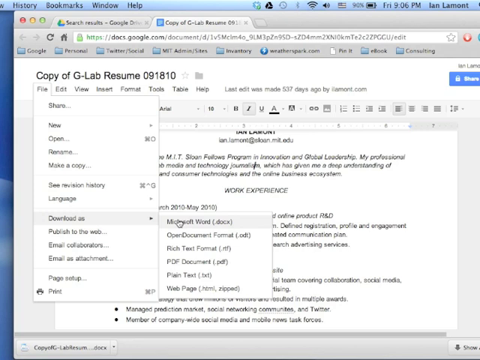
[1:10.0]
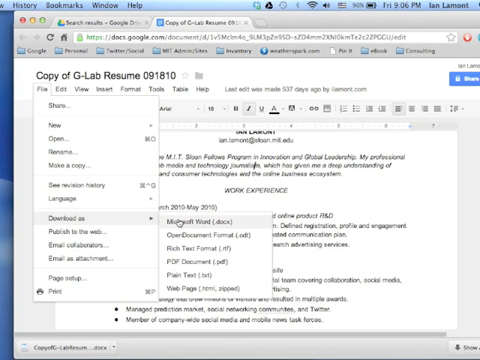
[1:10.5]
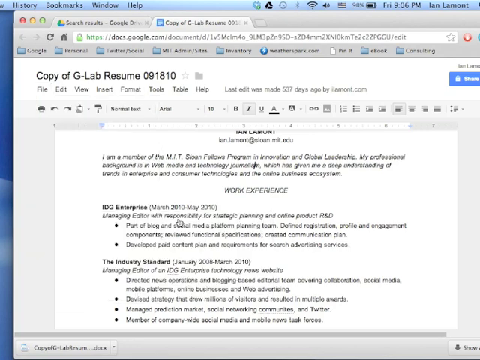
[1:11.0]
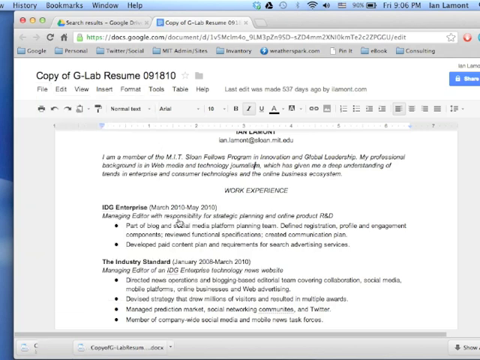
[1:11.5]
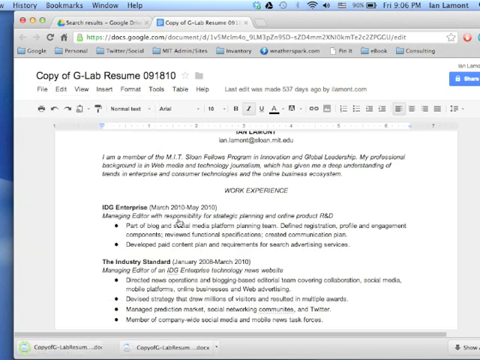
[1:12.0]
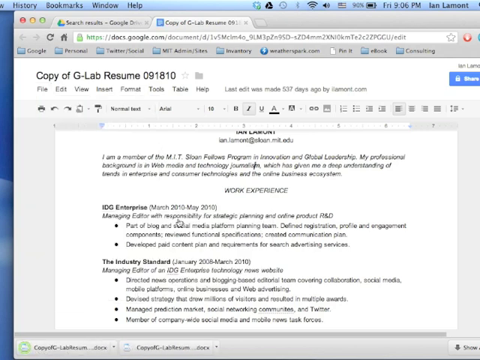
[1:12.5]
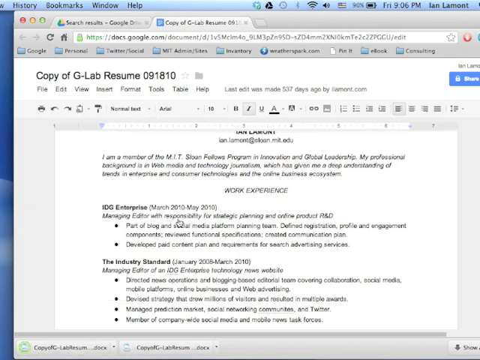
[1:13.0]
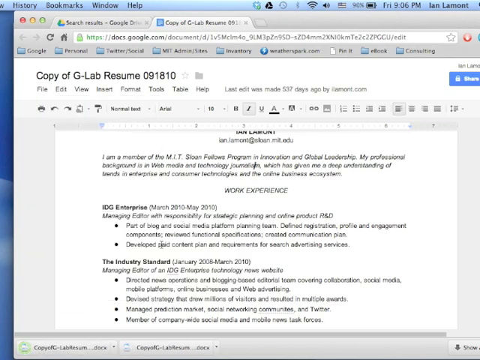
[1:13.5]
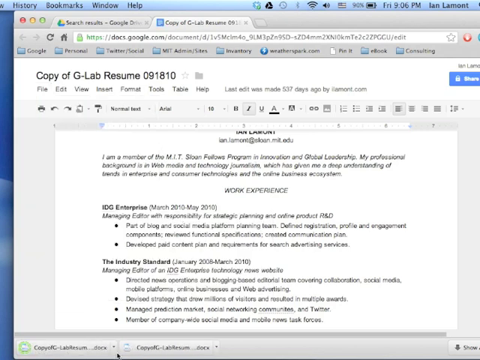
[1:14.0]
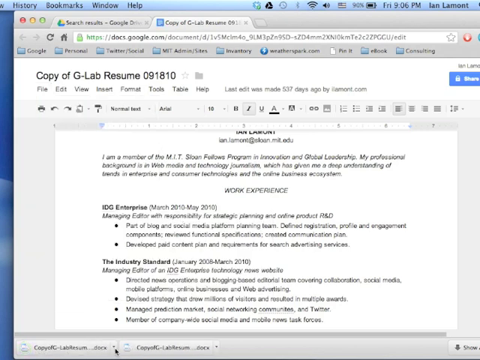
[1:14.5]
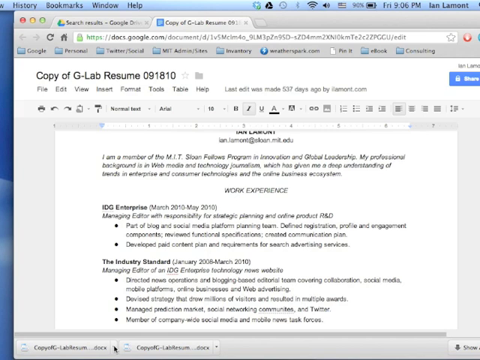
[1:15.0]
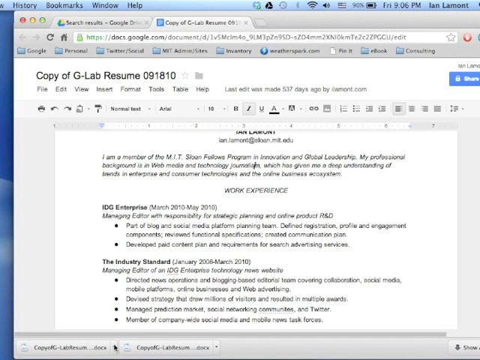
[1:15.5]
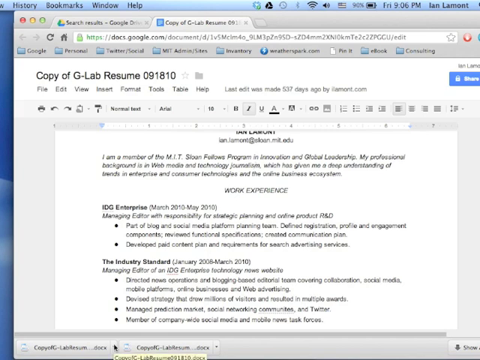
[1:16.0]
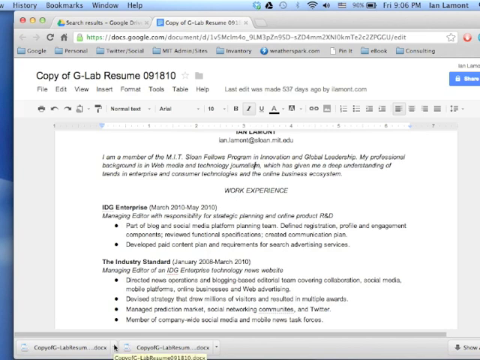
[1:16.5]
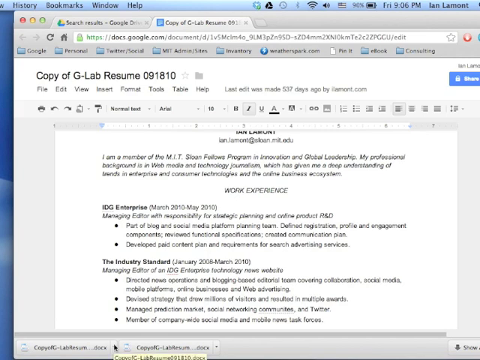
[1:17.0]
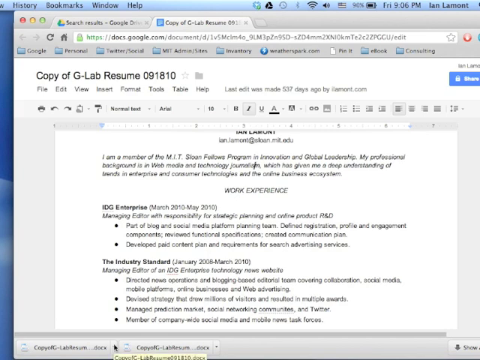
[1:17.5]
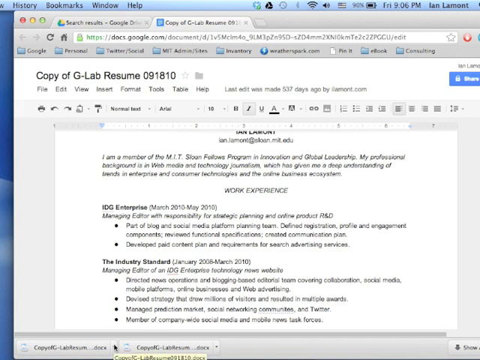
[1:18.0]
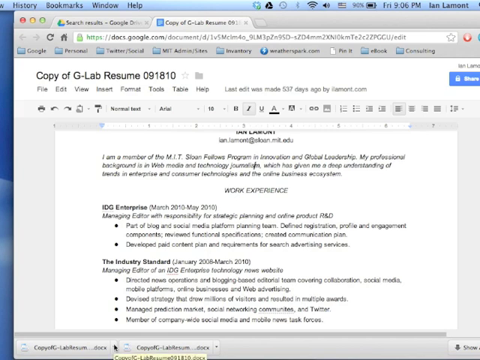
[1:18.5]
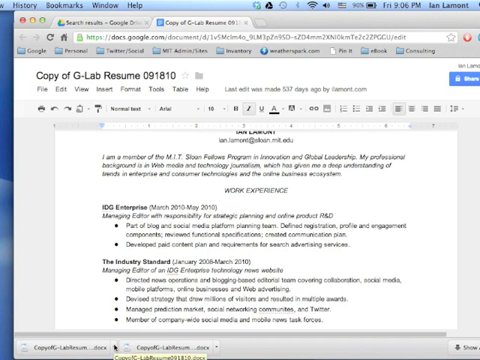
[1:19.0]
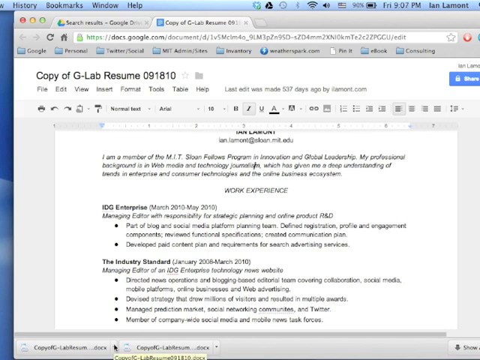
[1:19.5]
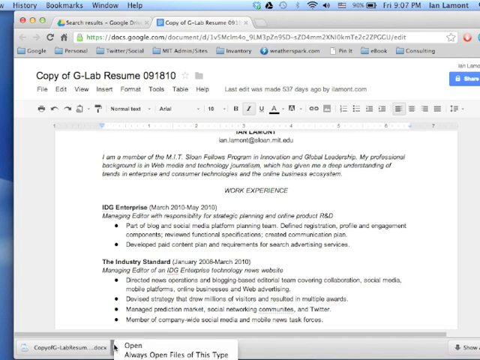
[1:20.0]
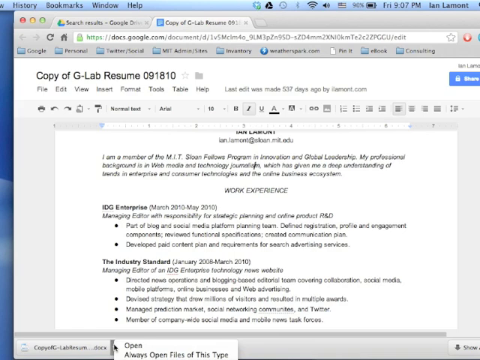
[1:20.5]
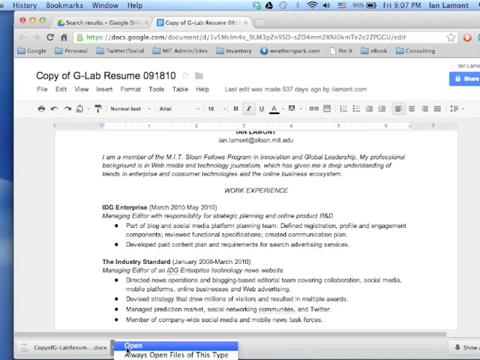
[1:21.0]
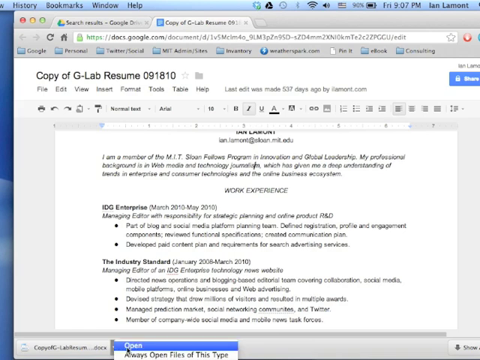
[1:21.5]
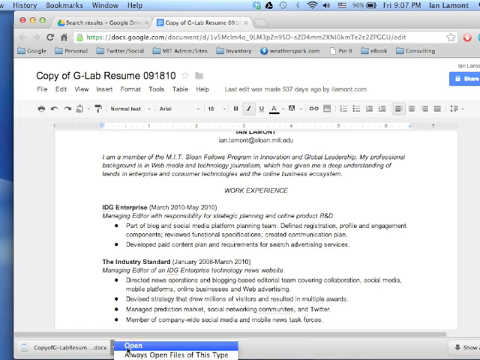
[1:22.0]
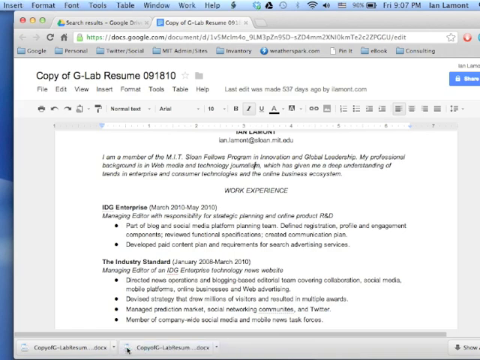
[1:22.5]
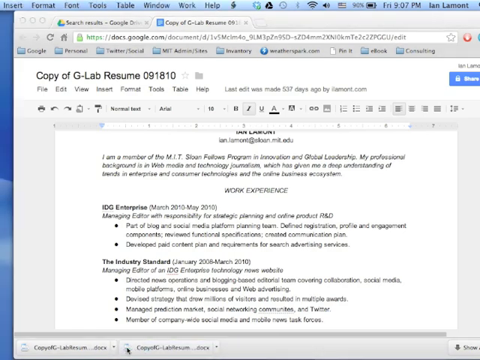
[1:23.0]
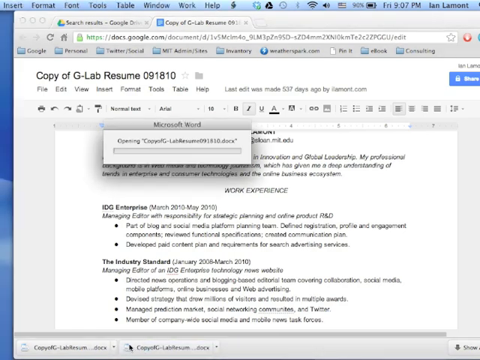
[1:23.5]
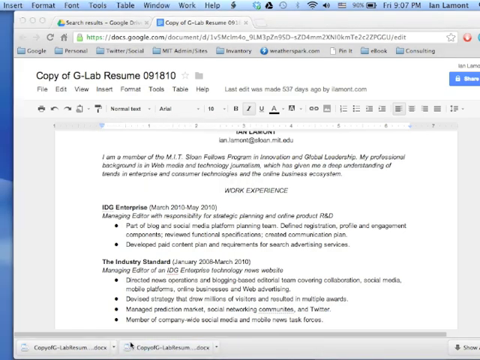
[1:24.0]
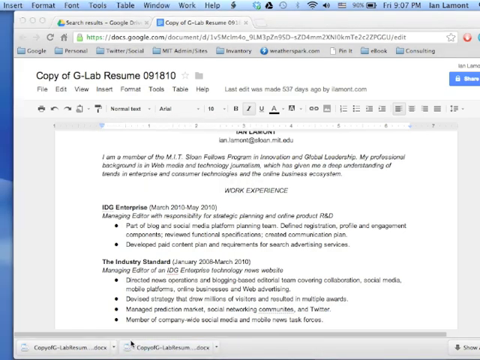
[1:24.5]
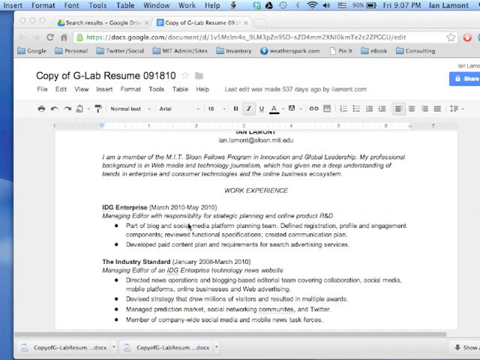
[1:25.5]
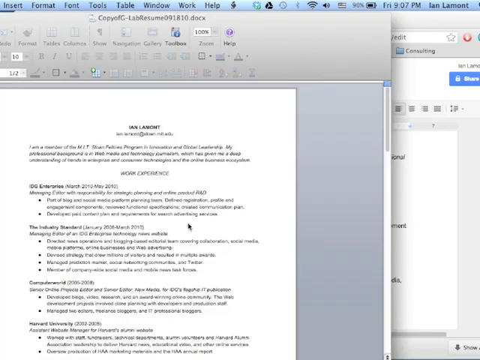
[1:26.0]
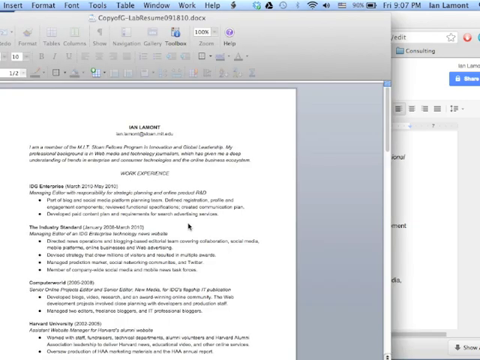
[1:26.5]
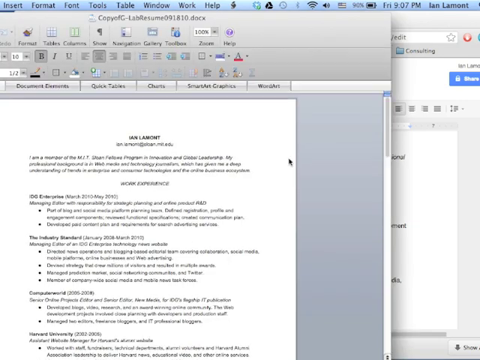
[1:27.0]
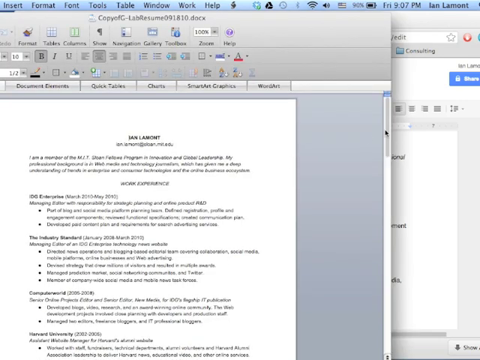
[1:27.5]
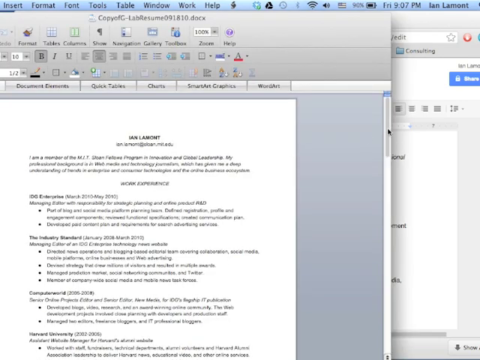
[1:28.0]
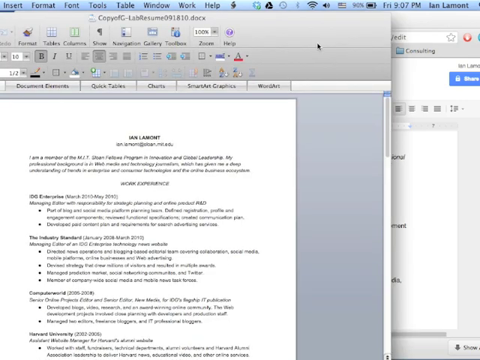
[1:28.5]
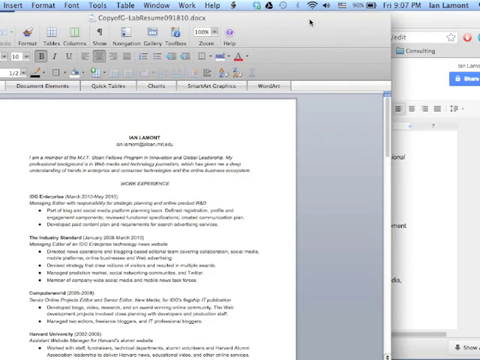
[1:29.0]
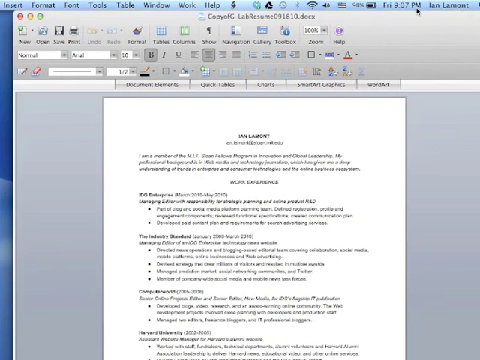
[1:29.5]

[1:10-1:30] What is presumably a desktop screen shows a Google document for Ian Lamont, a copy of the g lab resume, being downloaded as a Microsoft Word file. As the screen navigates to Microsoft Word, a greenish color flickers at the bottom far left, and the file downloads. The arrow then opens the document, which now appears in Microsoft Word format, changed from a Google Doc. The document is in the center of the screen, with a plain background on either side.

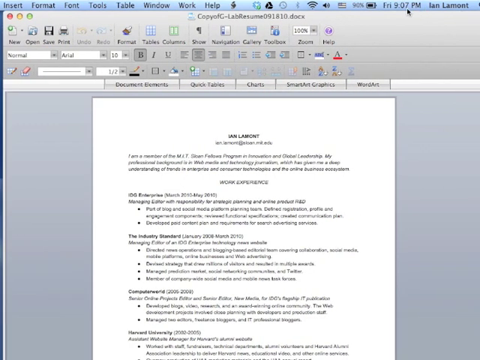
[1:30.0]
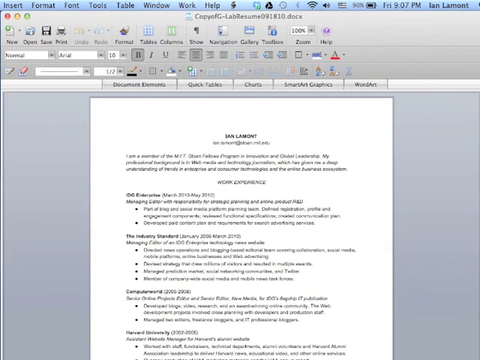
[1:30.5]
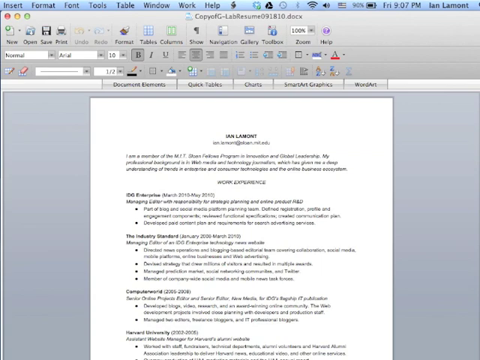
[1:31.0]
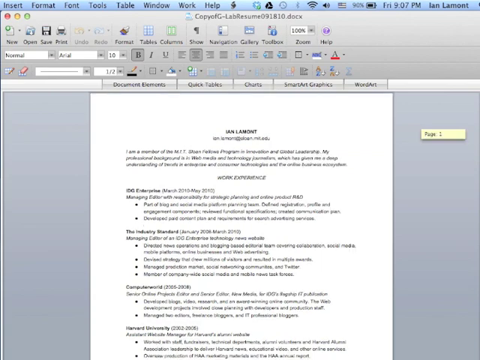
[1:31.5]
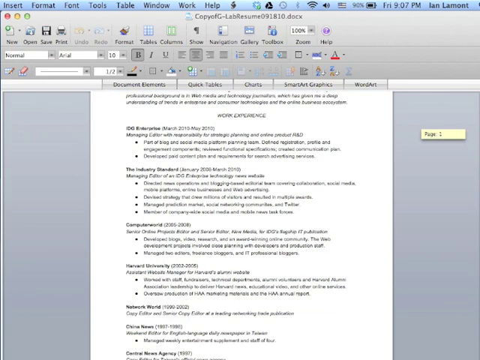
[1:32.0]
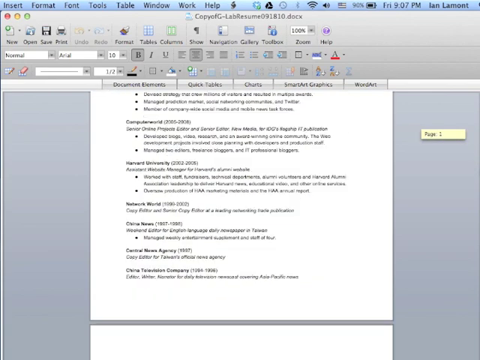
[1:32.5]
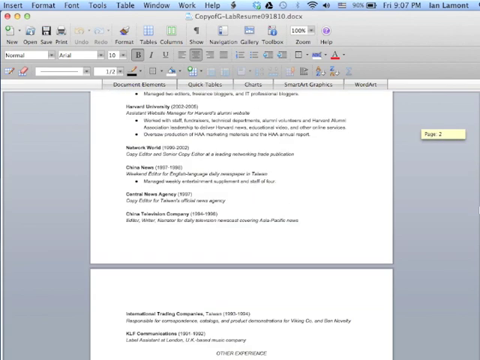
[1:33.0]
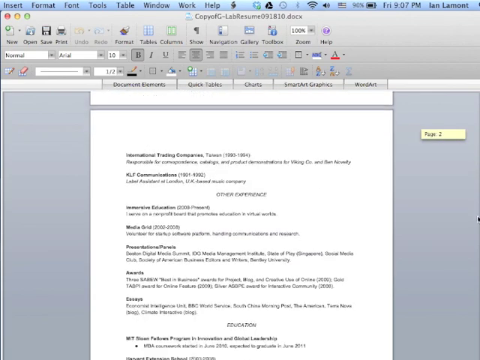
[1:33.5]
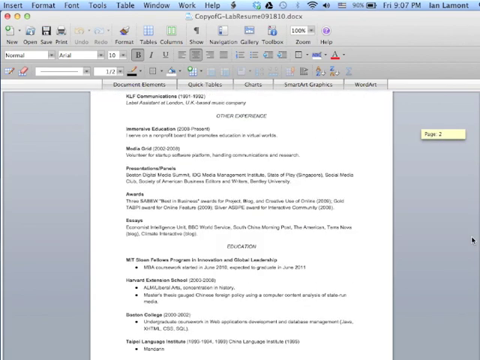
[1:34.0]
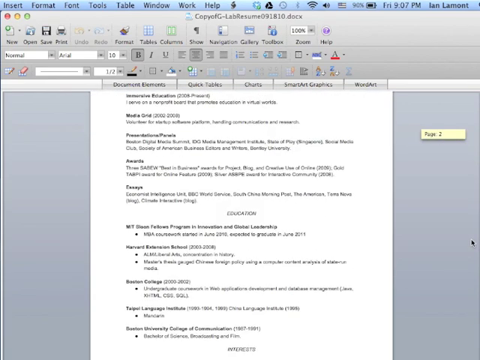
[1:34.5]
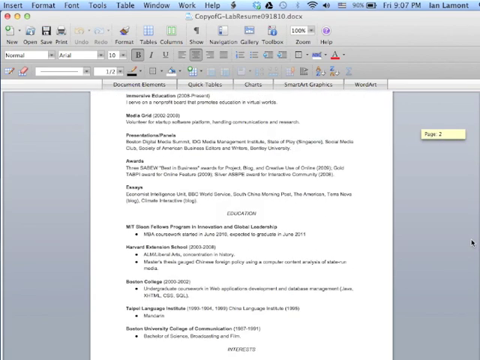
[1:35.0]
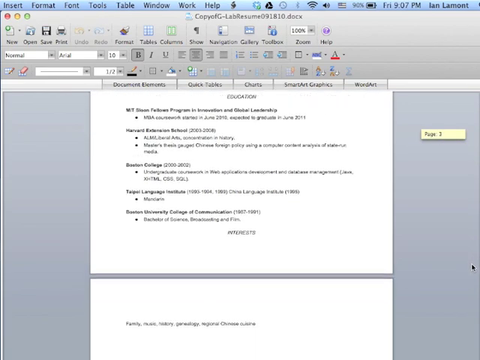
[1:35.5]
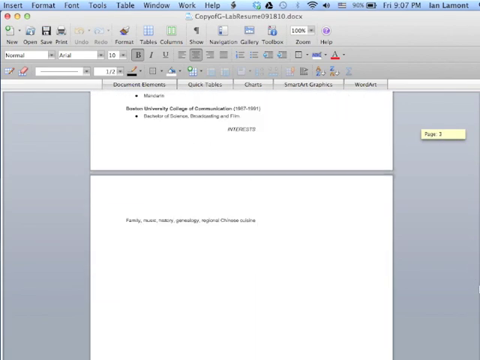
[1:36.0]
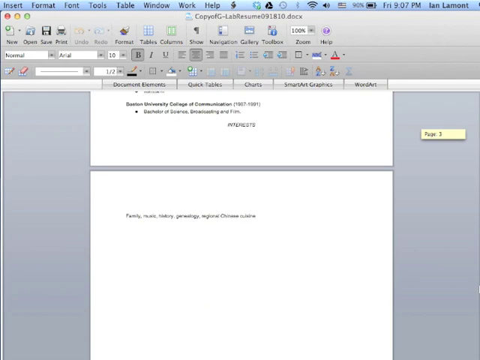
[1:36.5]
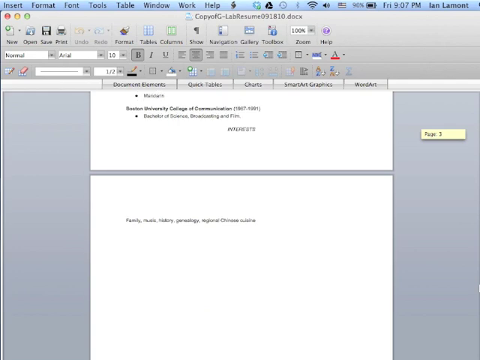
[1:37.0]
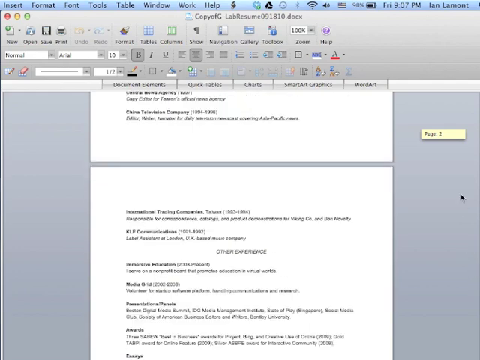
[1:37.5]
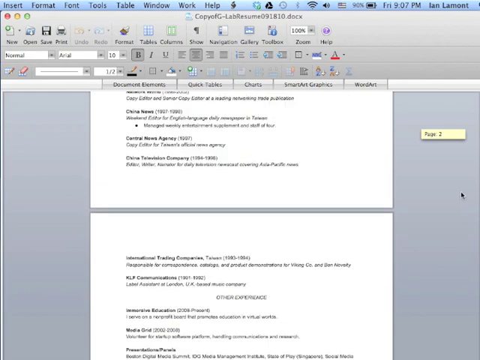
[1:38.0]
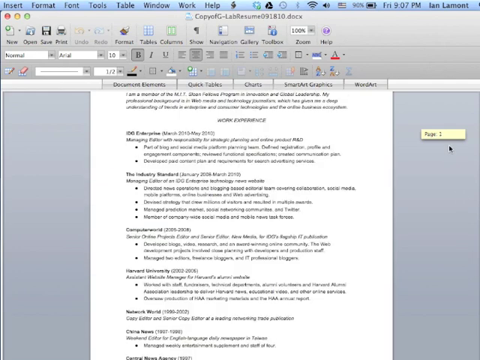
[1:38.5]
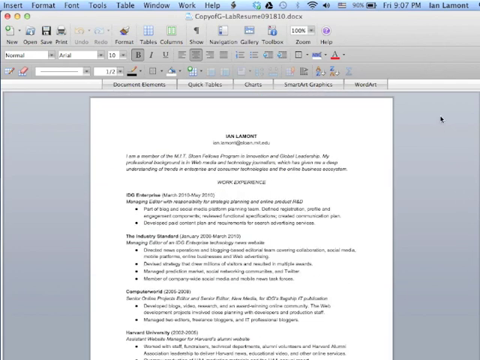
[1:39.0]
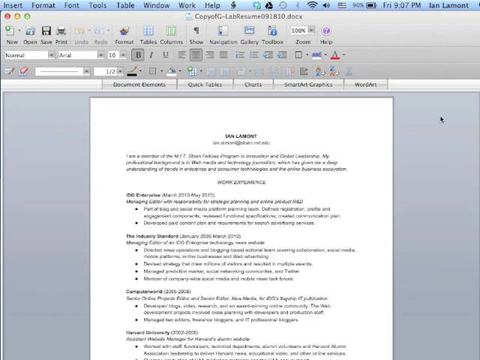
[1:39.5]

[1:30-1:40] The Microsoft Word document converted from the Google Doc is shown with a grayish background on its left and right. Its layout is the same as before. As the screen scrolls down, different pages become visible, about three pages of the document. At the top of the document are options including "quick tables" and charts, other unreadable information, B for bold and U for underline, the font name area, the font size, a highlight option, options for making tables and columns, and a zoom indicator showing the screen at 100%.